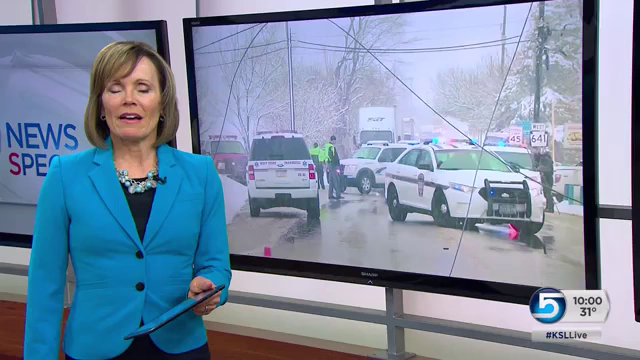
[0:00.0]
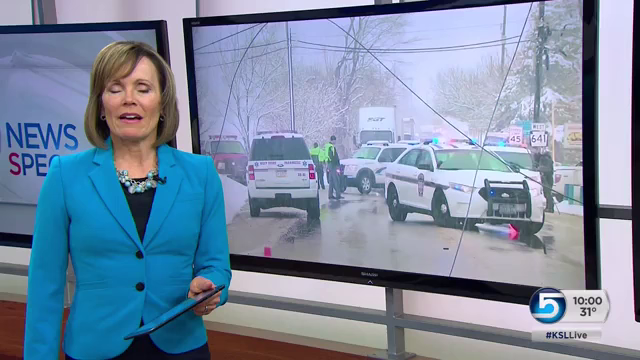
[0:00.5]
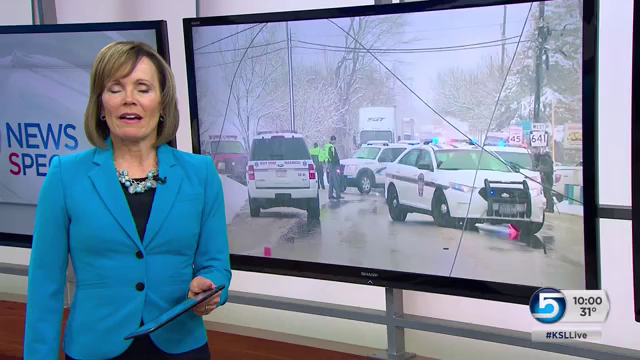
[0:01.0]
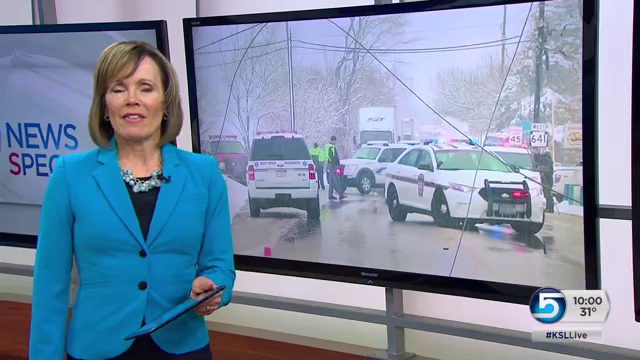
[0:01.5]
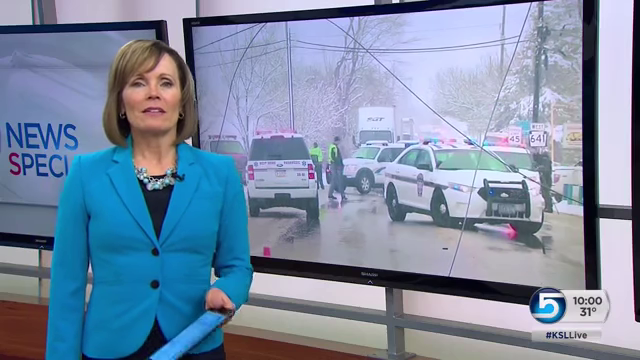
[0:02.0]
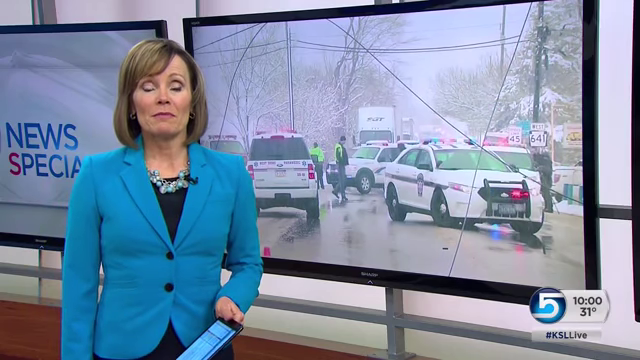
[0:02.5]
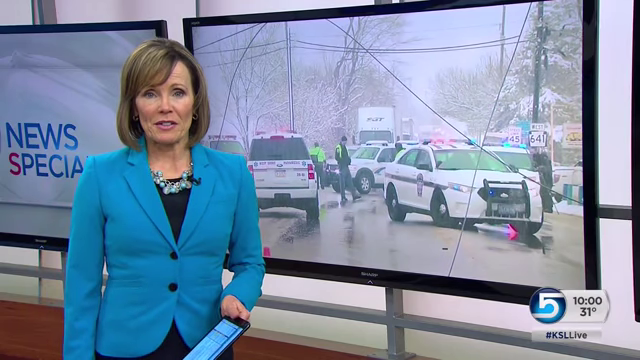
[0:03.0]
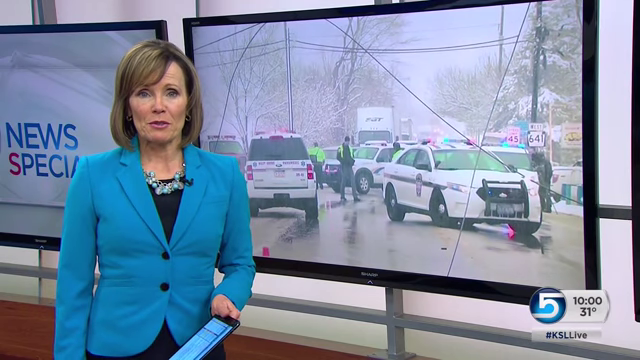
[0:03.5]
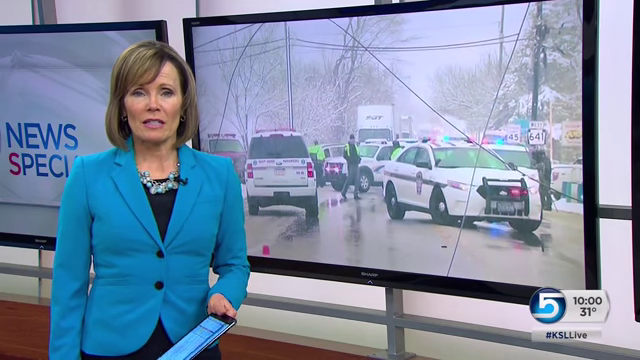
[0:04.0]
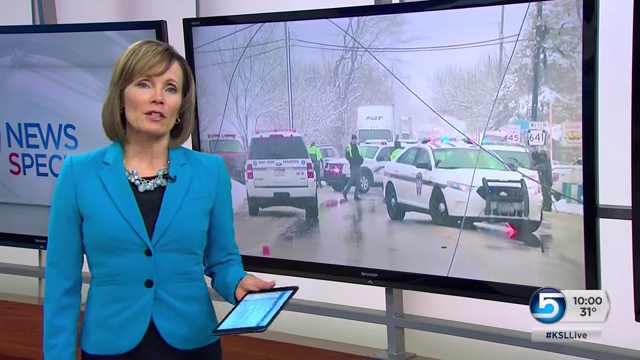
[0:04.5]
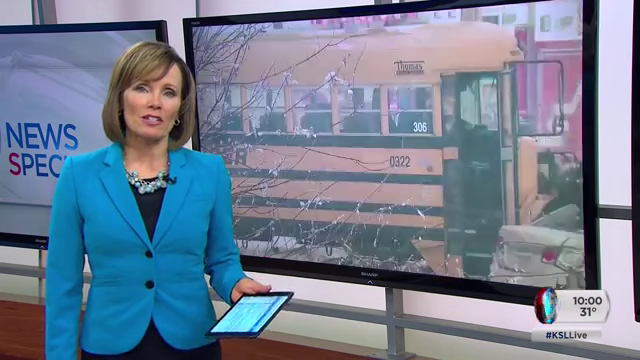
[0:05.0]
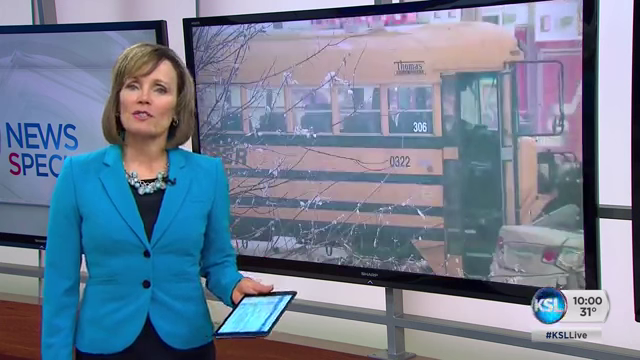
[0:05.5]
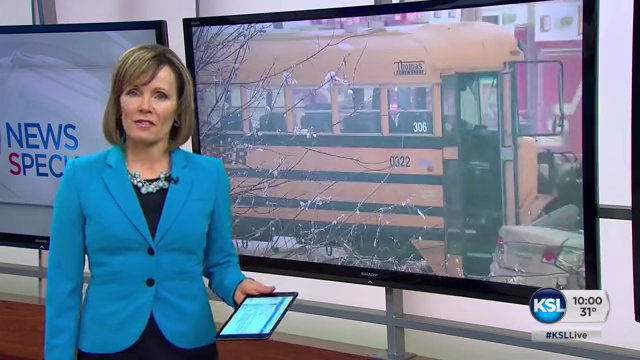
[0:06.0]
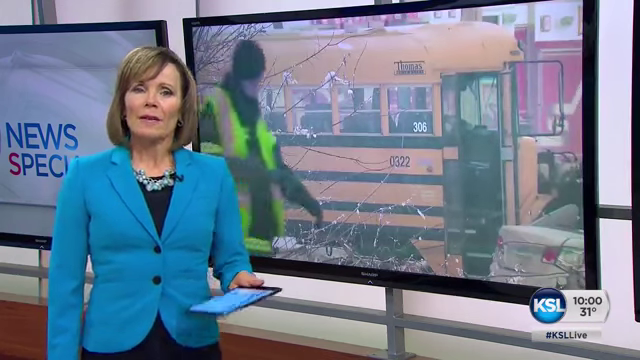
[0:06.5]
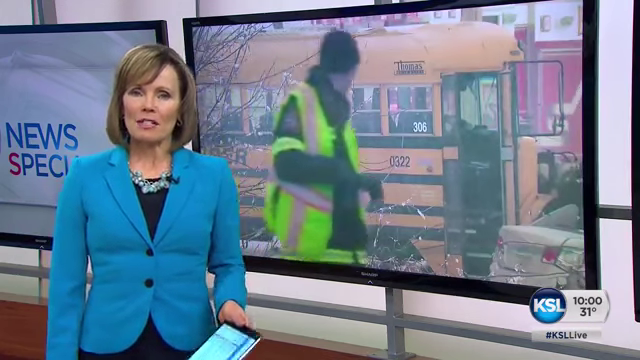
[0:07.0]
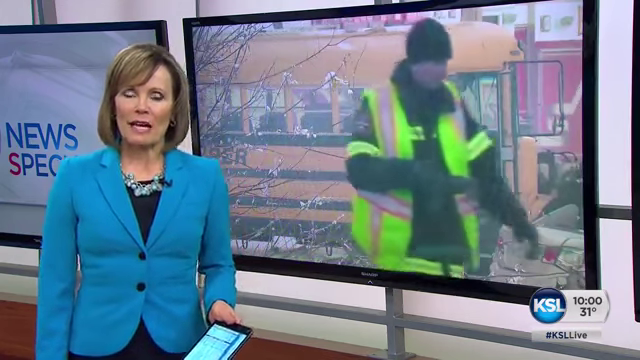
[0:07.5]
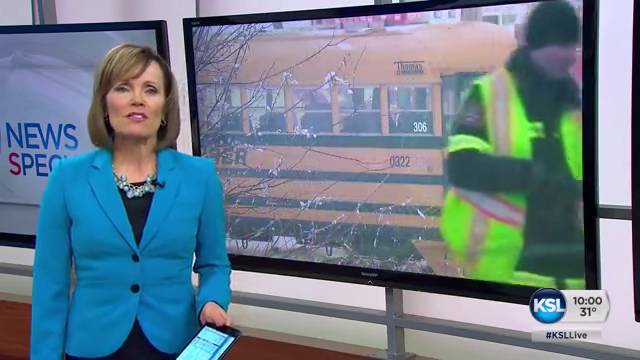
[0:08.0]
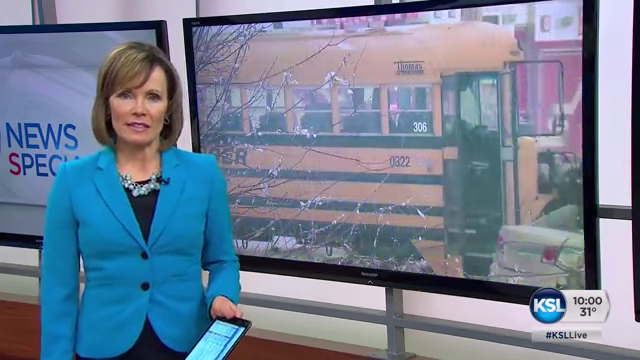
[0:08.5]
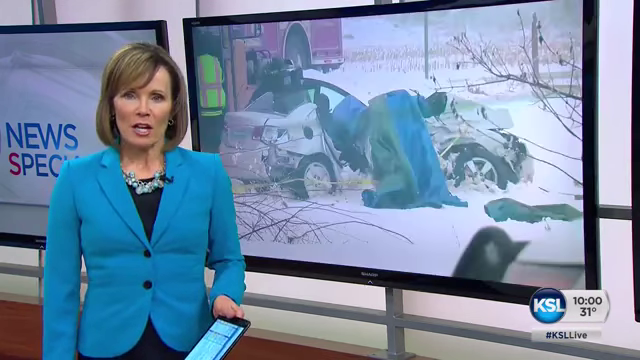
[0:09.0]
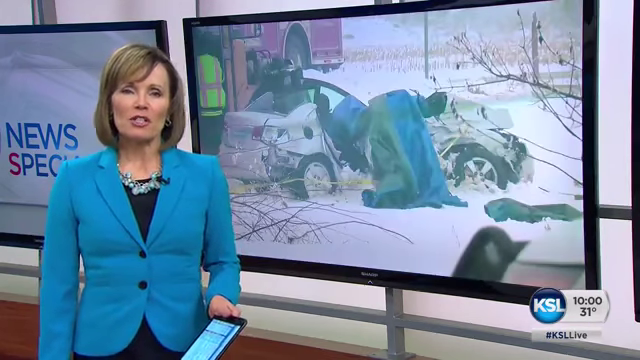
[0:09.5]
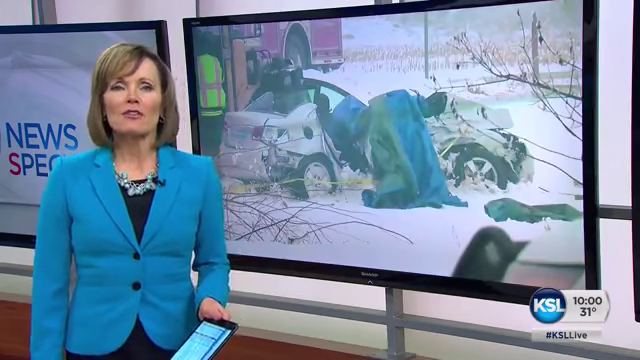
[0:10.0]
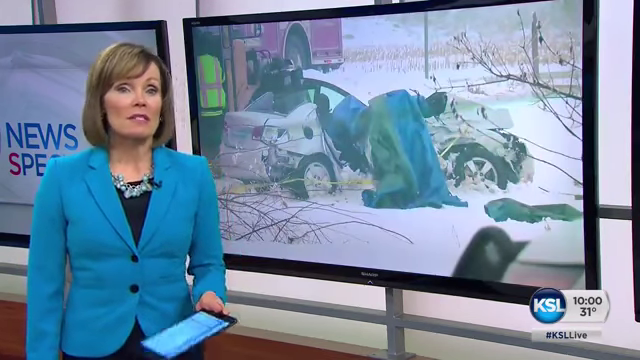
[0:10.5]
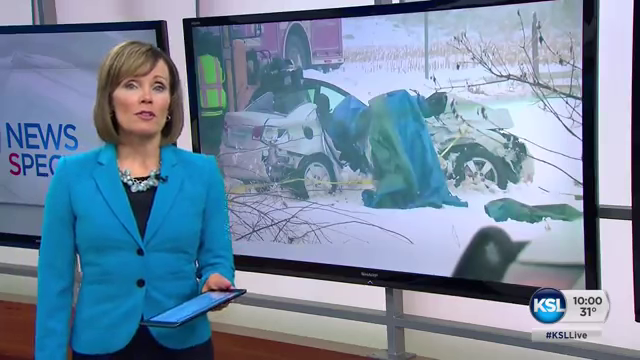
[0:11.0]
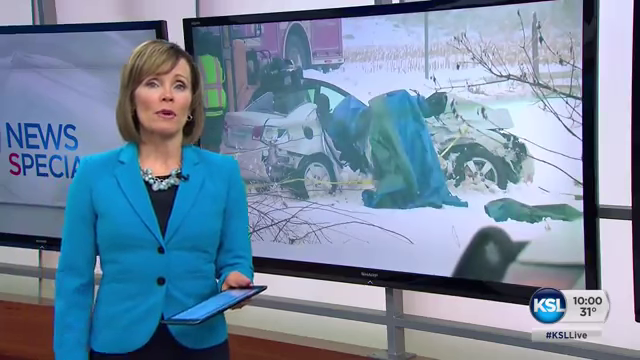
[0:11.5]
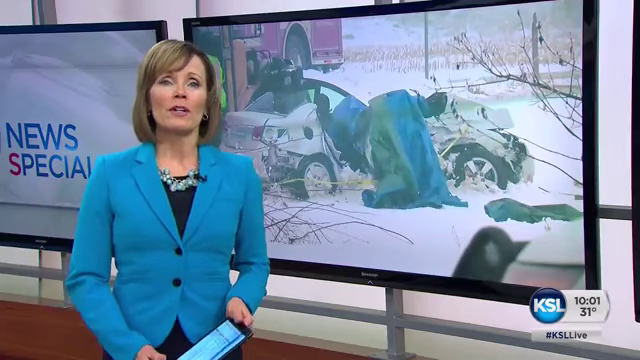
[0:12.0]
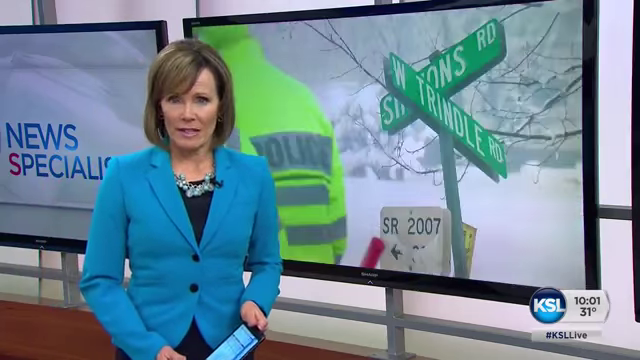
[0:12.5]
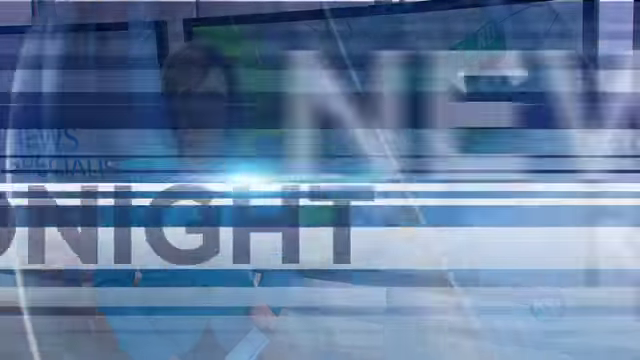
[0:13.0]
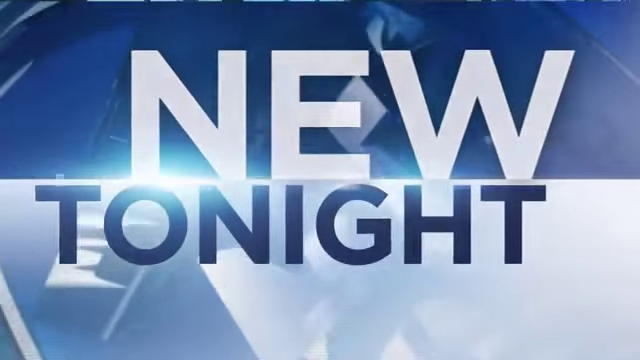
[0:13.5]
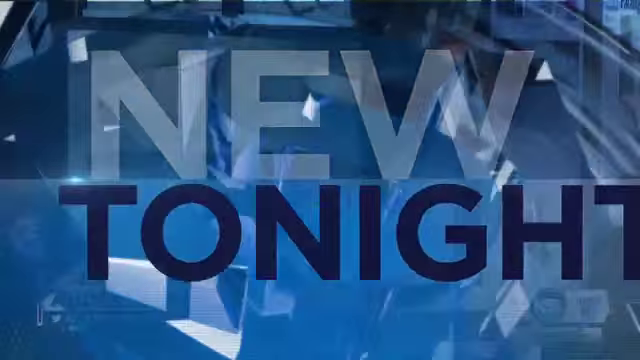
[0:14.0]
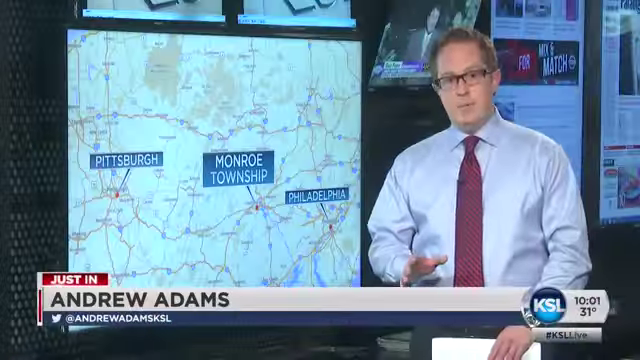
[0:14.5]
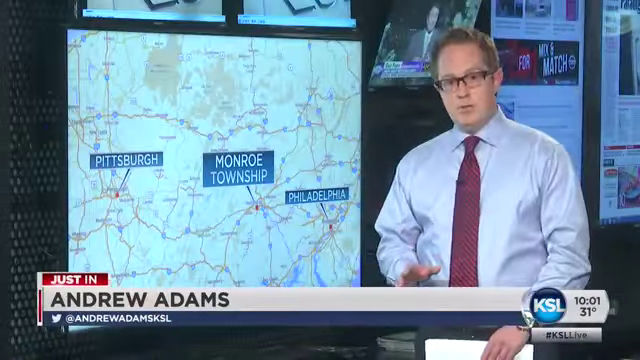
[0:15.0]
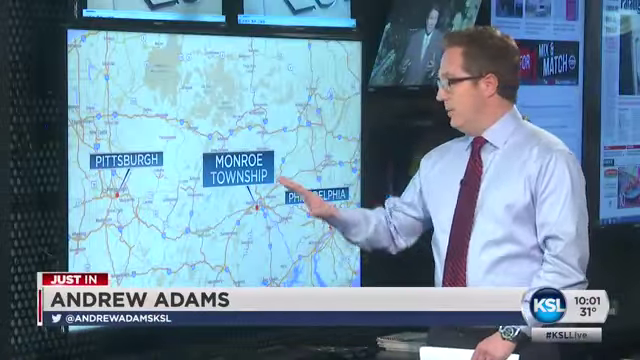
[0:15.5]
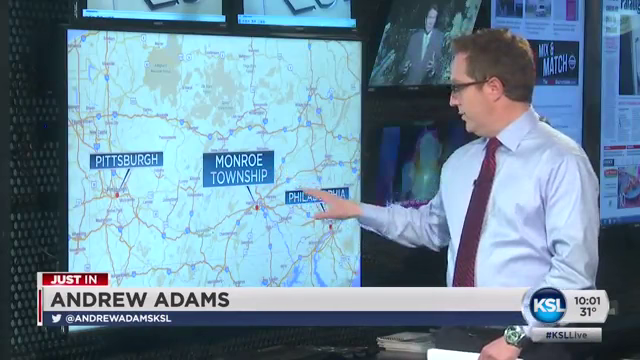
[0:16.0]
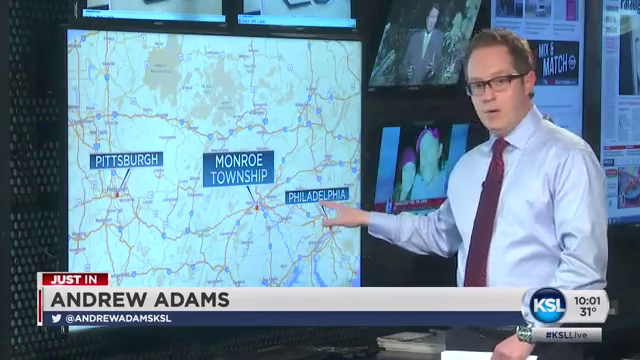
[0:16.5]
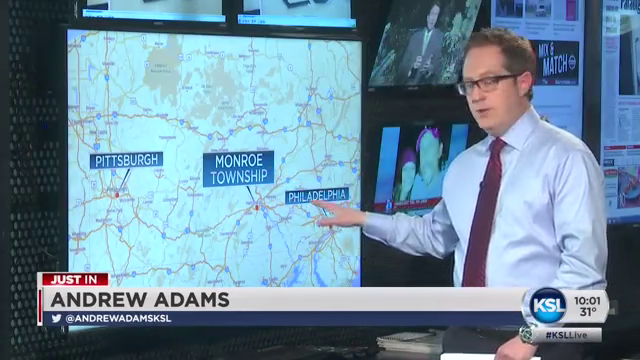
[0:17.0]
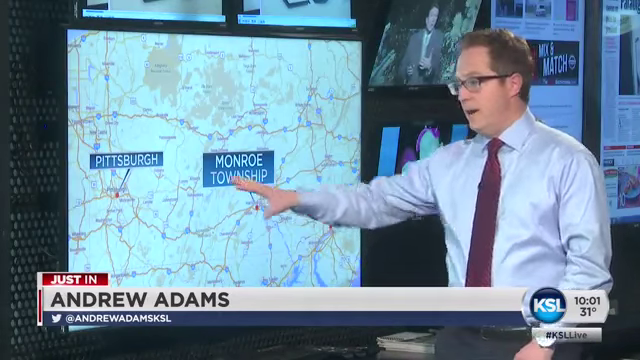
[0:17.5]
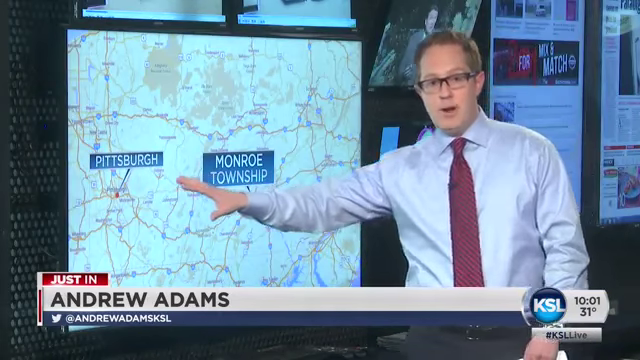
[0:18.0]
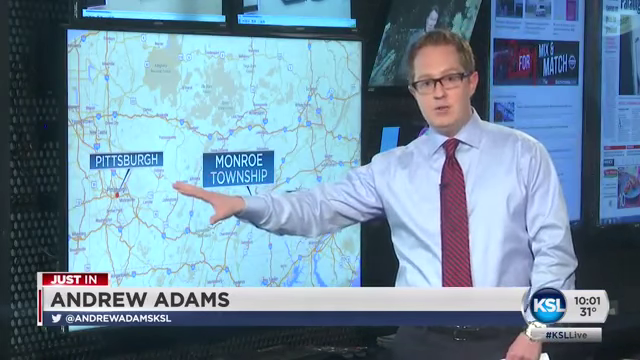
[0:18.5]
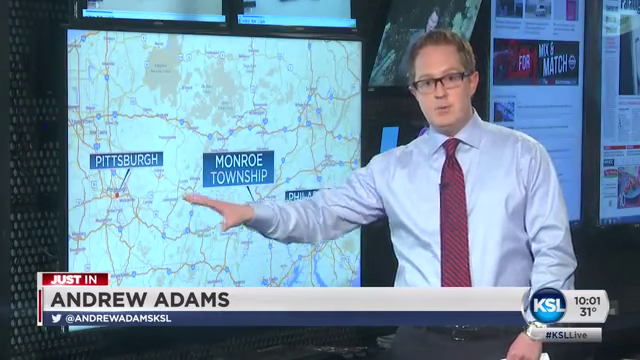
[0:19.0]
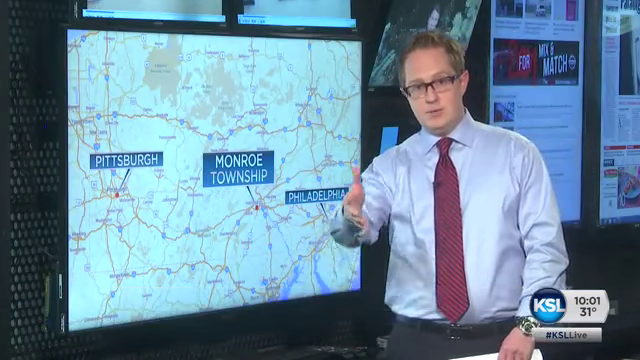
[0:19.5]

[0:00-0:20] The video seems to be a news clip, with "five for five news" visible at the bottom. A female reporter or news anchor in a bright blue jacket stands on the left of the screen, looking directly at the camera. On the right side, a television behind her shows some police cars. She holds what looks like a small tablet in her left hand and kind of gestures with her head a couple of times, kind of nodding. The images on the screen in the background change to show some kind of car accident, in which a white sedan appears to be smashed up and in the snow. The woman kind of gestures with her left hand, still holding the apparent tablet. The video cuts to a transition screen that says "new tonight," then to a different anchor, a man standing on the right side with a screen to his left. Text under him says "just in Andrew Adams." He points to a map on the screen that shows "Pittsburgh" furthest to the left, then "Monroe Township," then "Philadelphia." He points to Monroe Township, then Philadelphia, then Pittsburgh on the far left.